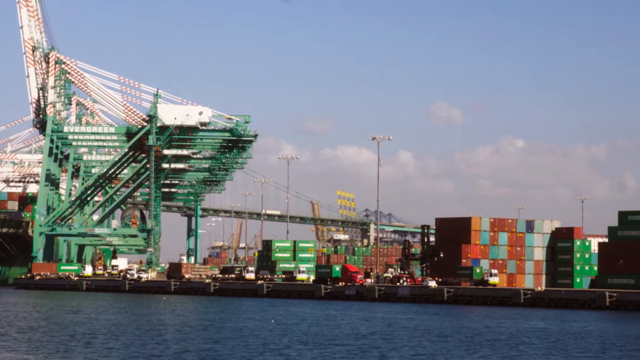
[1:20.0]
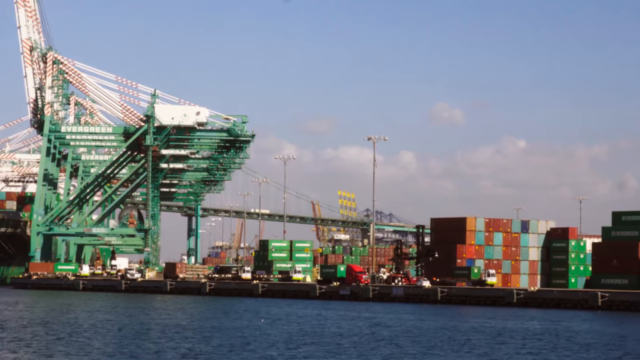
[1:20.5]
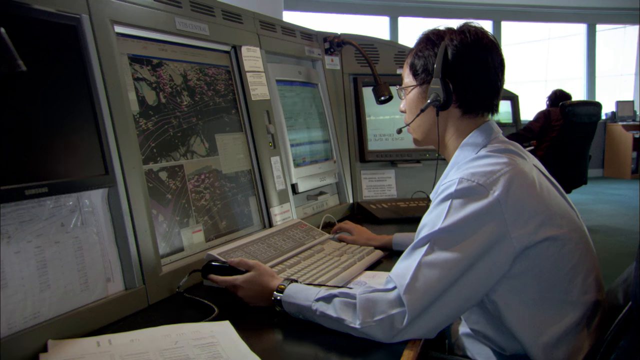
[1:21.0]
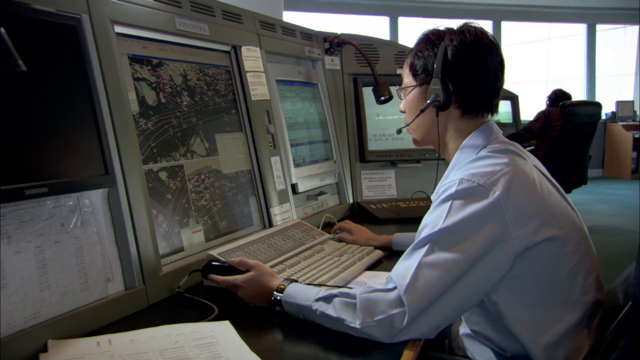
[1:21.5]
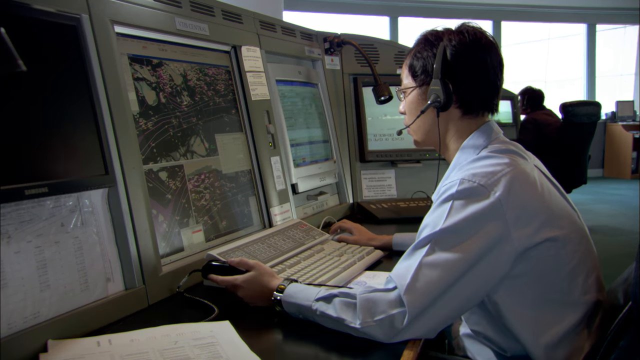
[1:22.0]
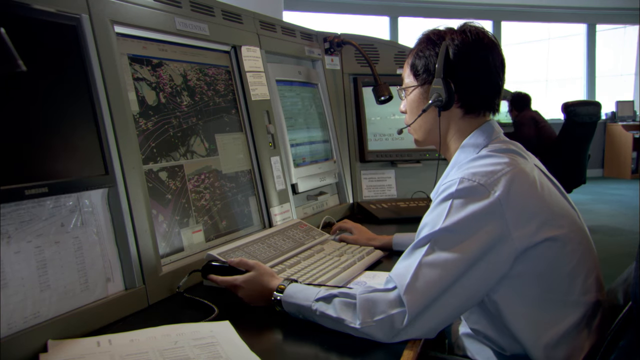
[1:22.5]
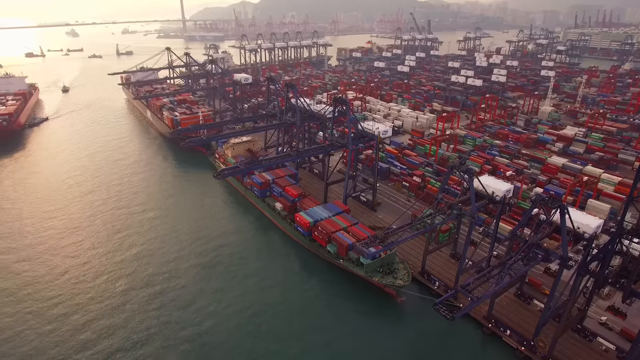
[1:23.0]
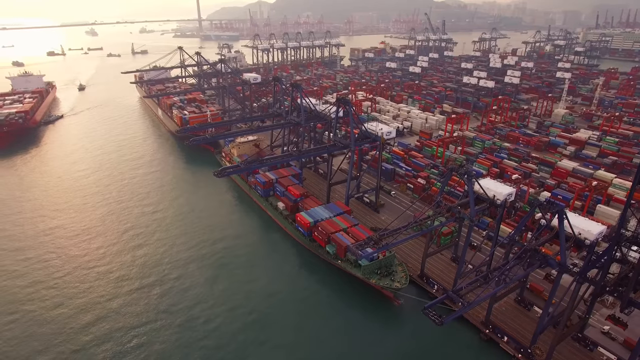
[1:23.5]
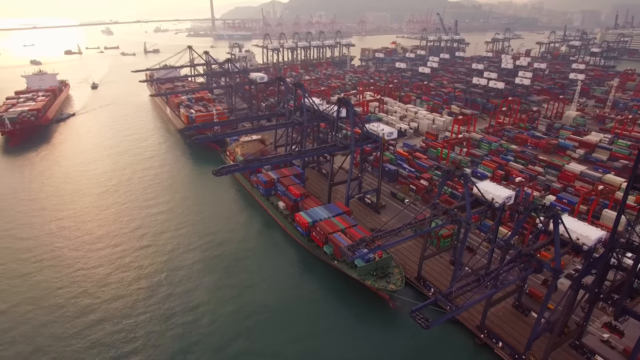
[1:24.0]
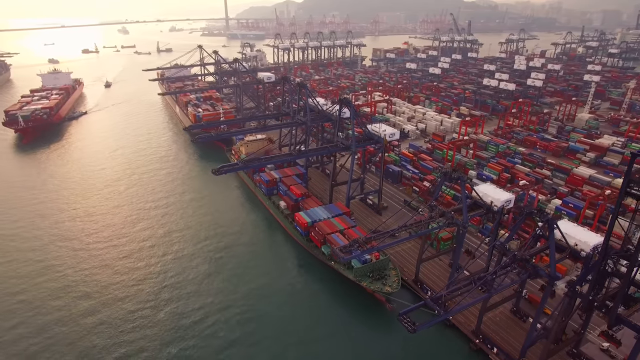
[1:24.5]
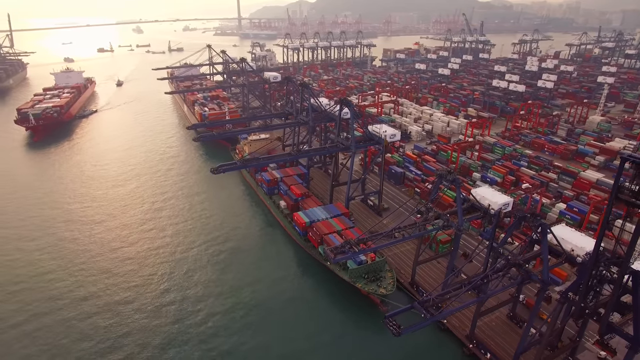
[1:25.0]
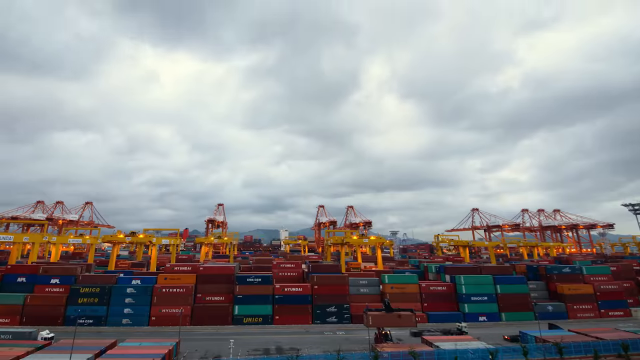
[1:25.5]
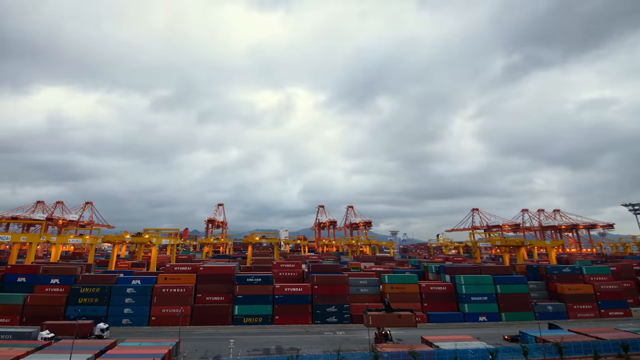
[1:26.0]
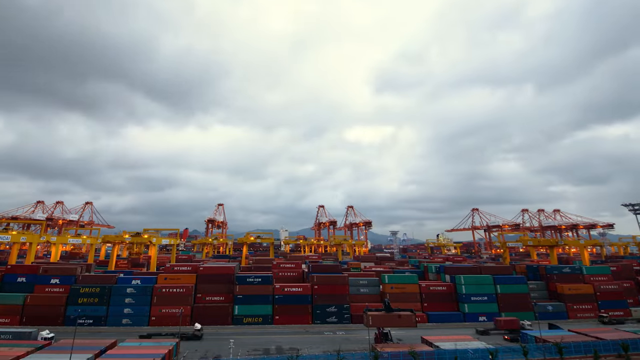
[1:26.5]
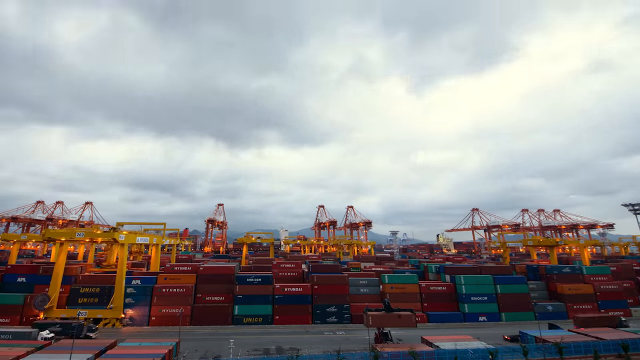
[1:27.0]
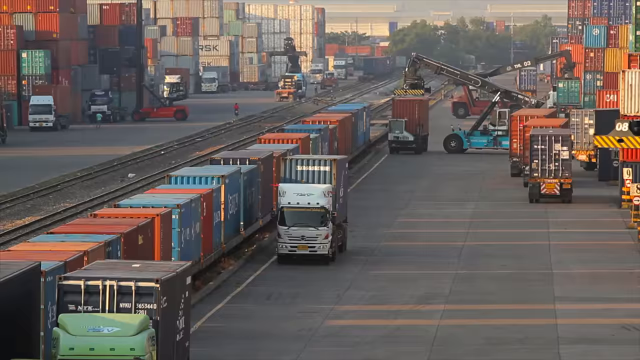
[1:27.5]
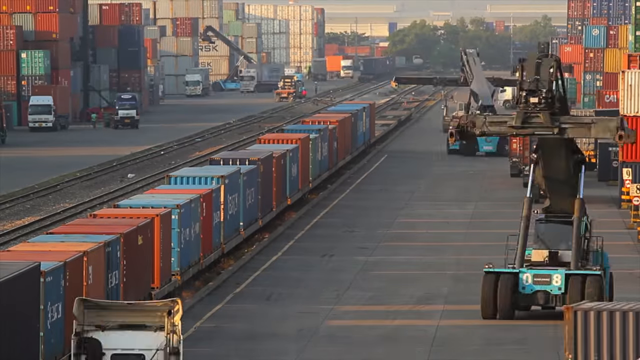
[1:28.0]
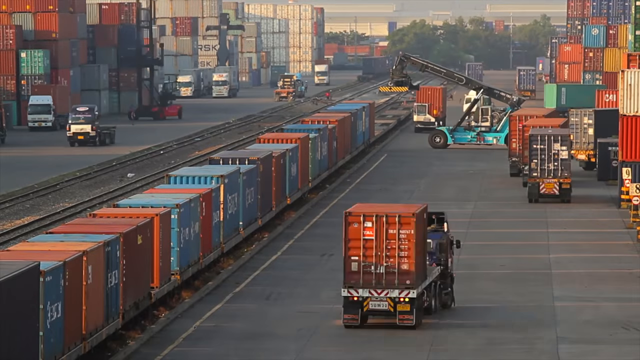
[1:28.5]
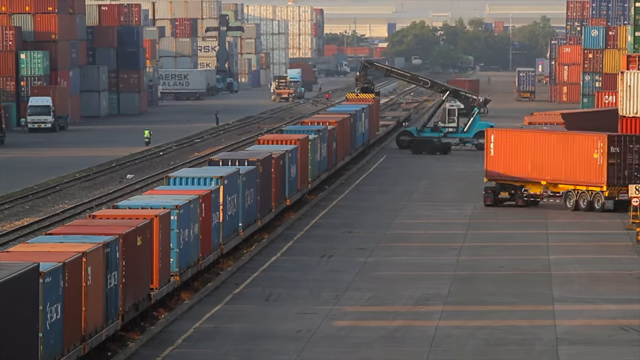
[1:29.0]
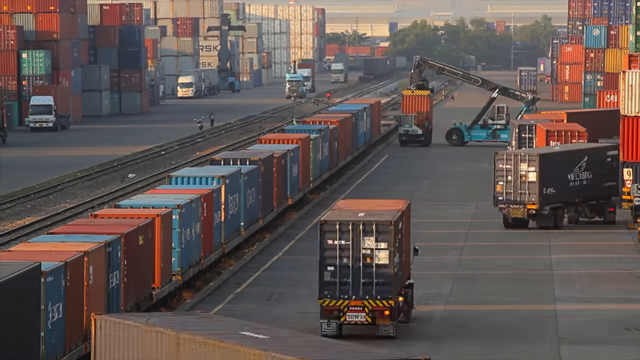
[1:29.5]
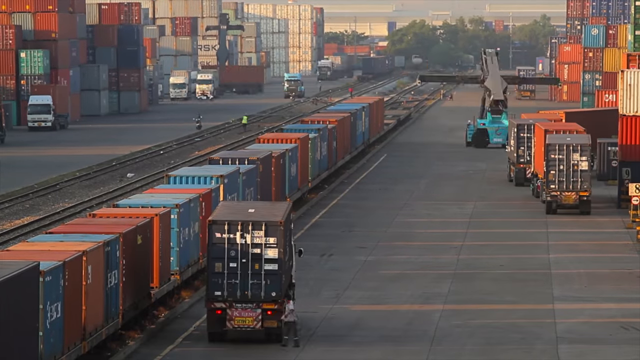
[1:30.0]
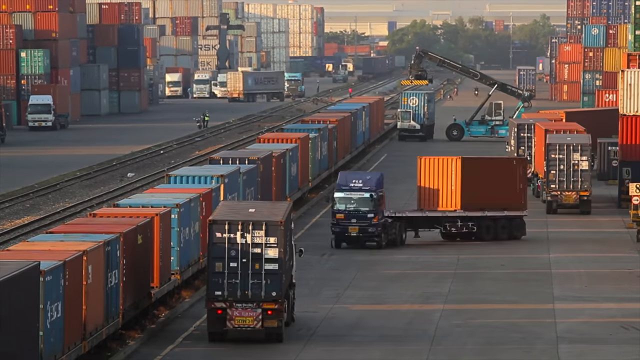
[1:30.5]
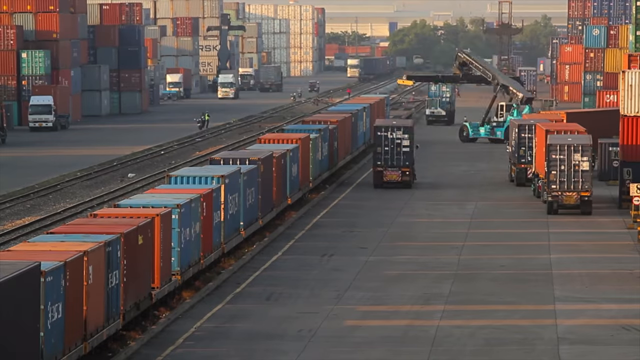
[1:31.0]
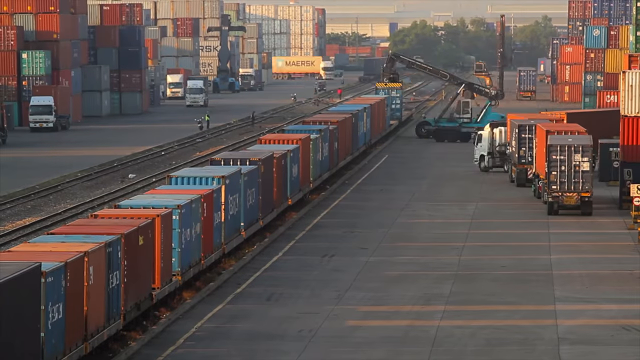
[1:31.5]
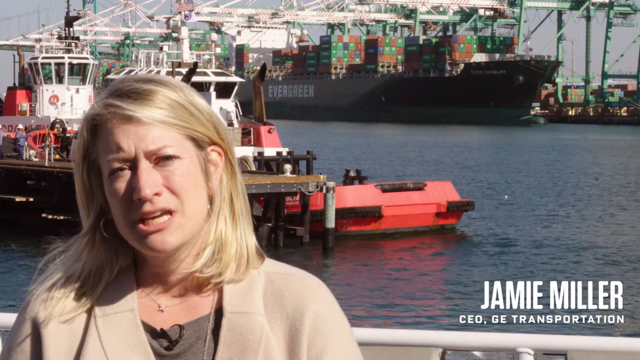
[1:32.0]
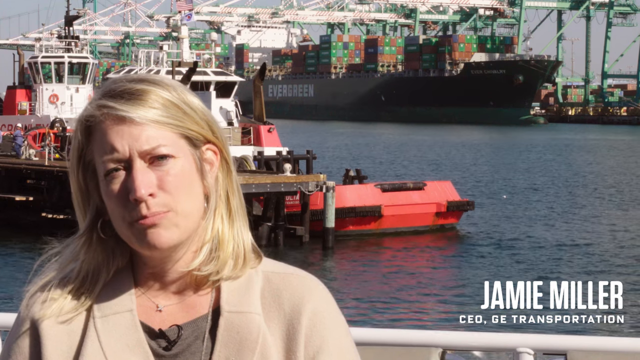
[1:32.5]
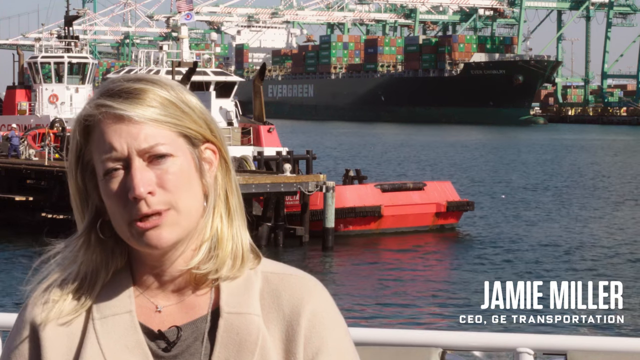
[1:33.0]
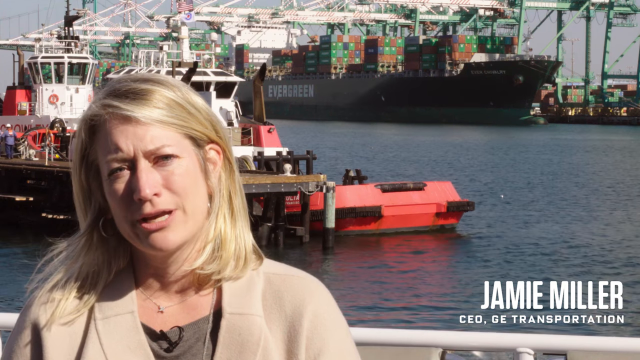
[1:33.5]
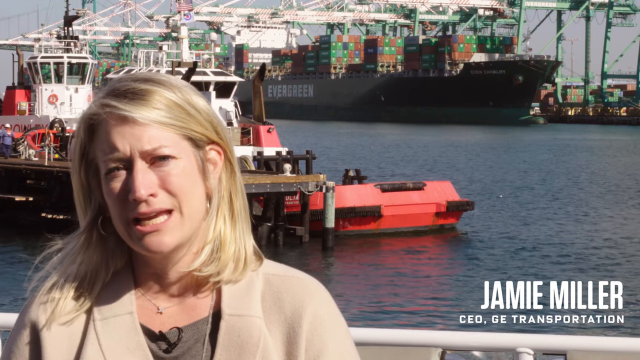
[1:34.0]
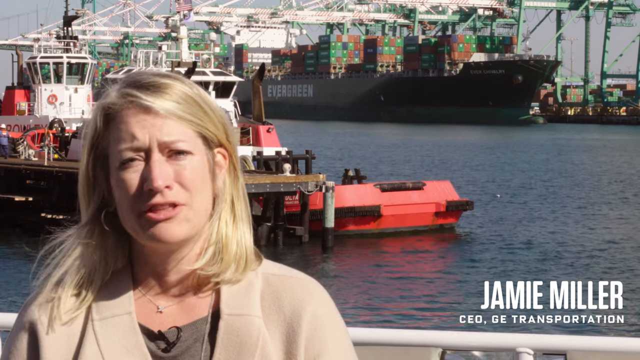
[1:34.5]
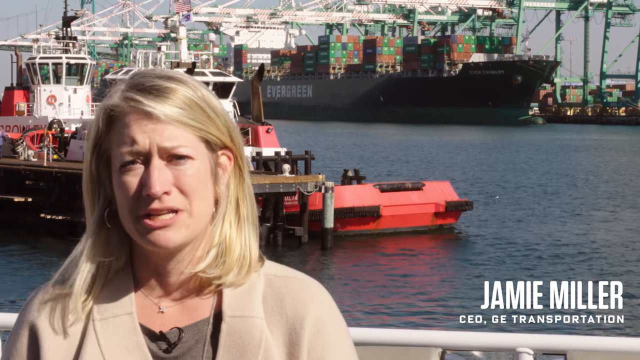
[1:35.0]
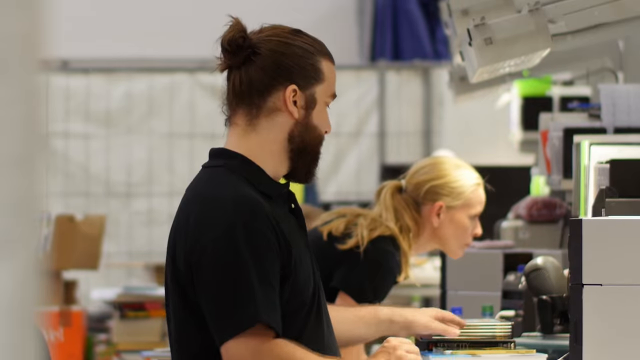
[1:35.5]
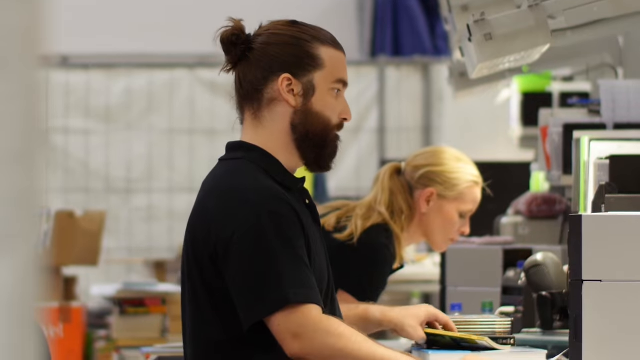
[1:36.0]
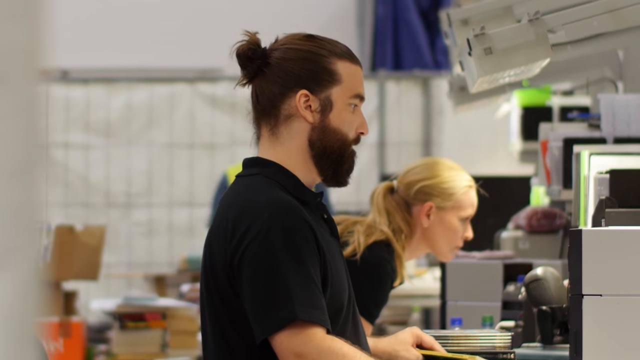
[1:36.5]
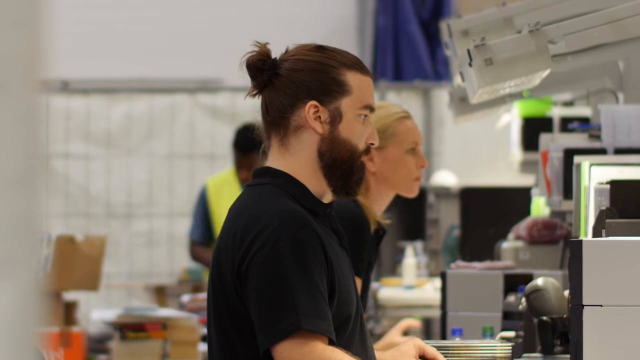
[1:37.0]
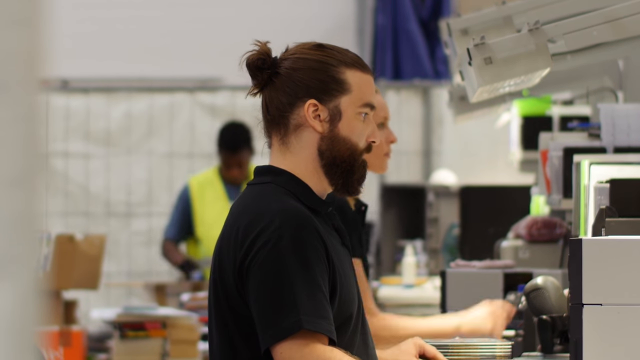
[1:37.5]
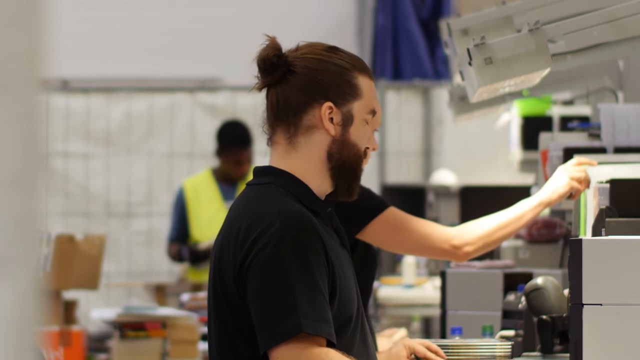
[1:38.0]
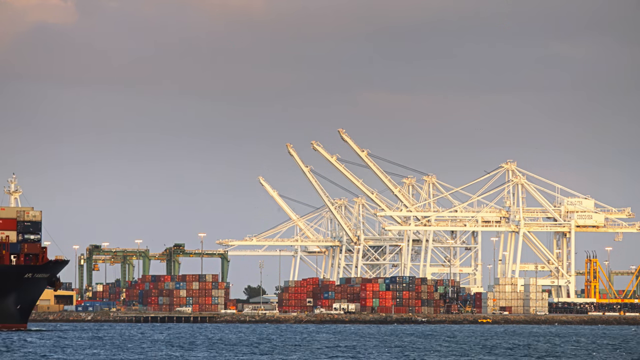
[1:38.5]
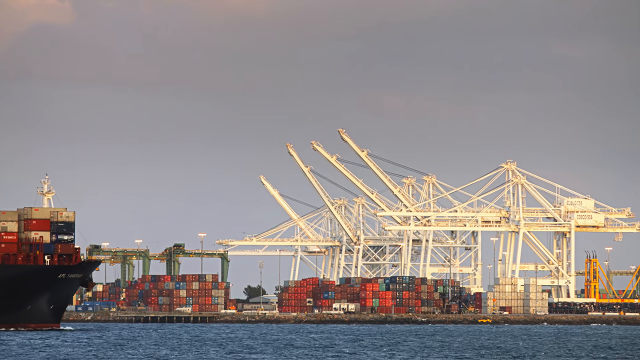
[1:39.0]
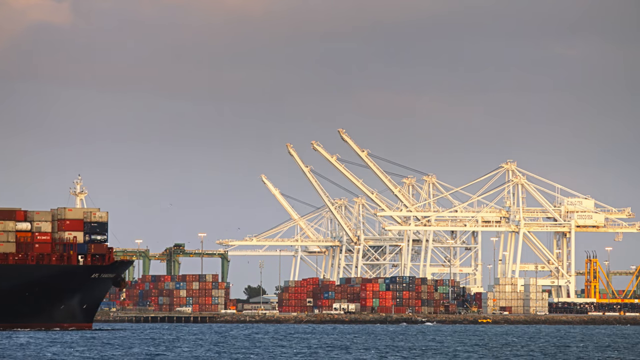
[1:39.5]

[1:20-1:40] Another set of cranes is shown. A man sits at a computer wearing a headset, apparently with several video feeds up in front of him, probably monitoring the cranes as they offload the containers. A high view of a port shows several container ships parked at docks. More time-lapse video shows containers being loaded and unloaded from ships, with clouds moving quickly across the sky. A bunch of containers are lined up on the ground, and smaller vehicles pick containers off trucks and put them onto some railings. A blonde woman speaks at the camera, standing in front of ocean water; on-screen text gives her name as Jamie Miller, CEO of GE Transportation. A couple of people appear to be working inside a room: a man in a black T-shirt with a man bun and a beard, and a blonde woman standing behind him. A container ship goes across the water.